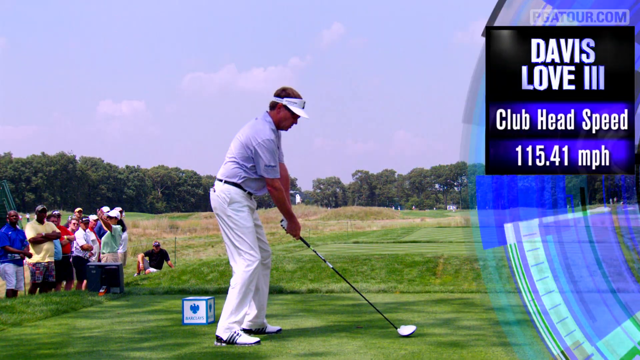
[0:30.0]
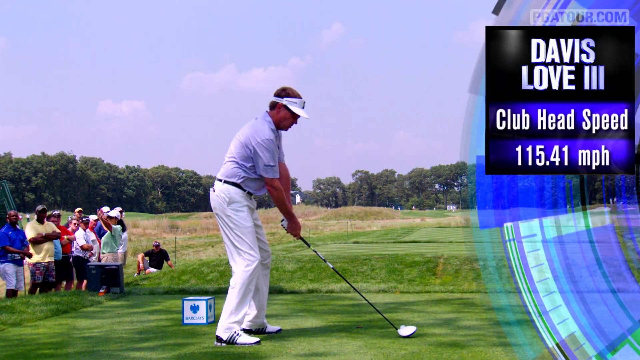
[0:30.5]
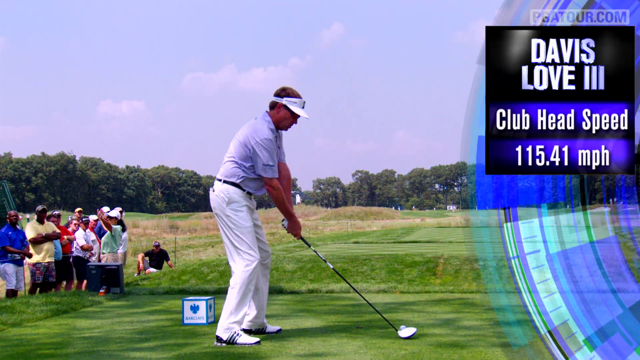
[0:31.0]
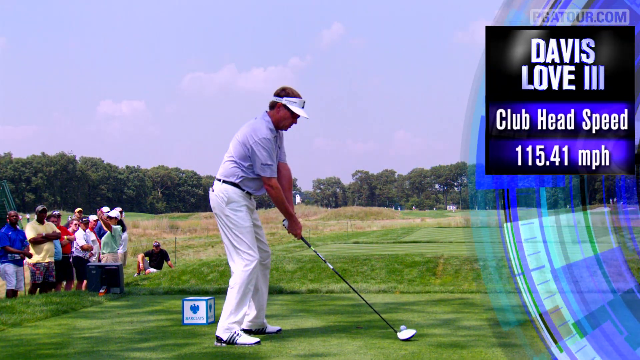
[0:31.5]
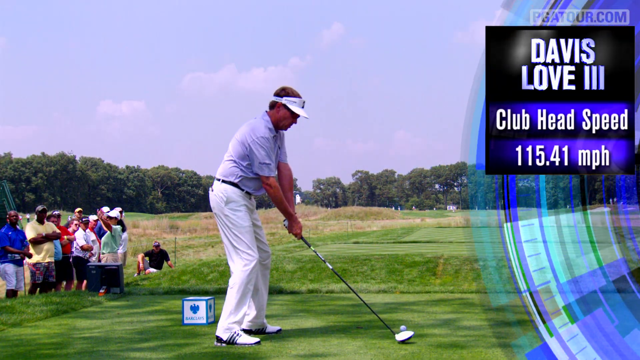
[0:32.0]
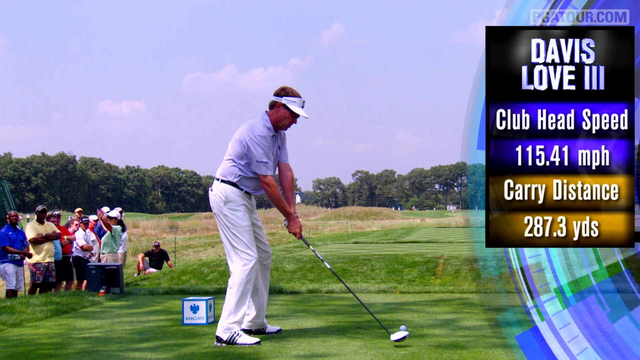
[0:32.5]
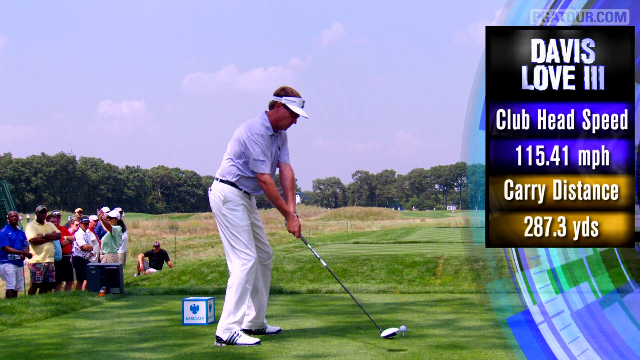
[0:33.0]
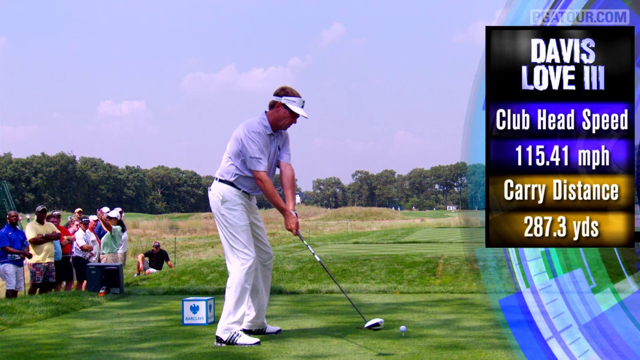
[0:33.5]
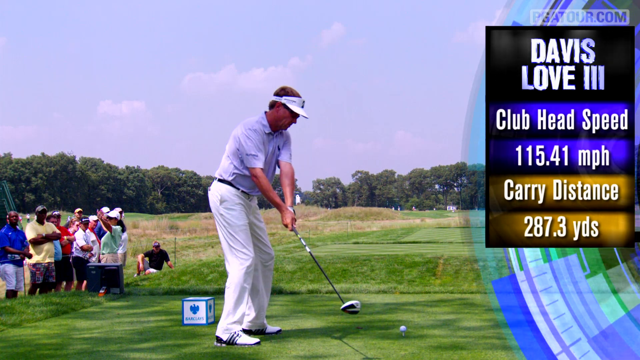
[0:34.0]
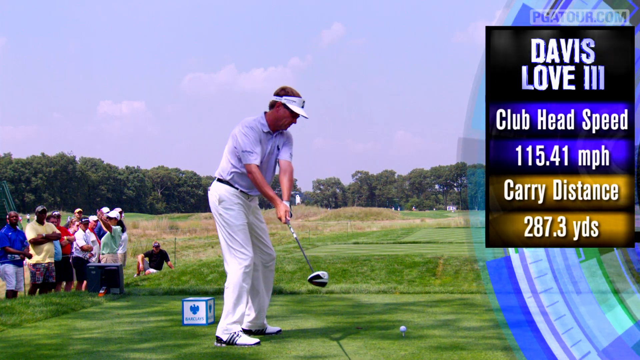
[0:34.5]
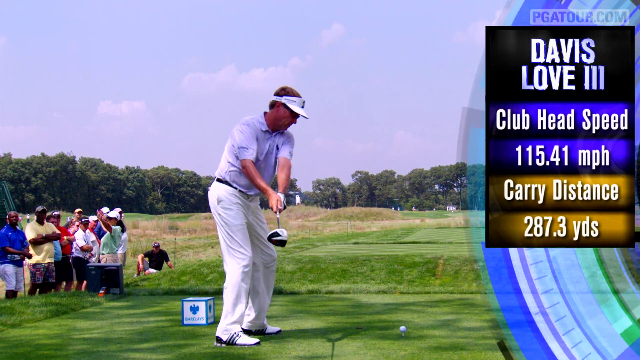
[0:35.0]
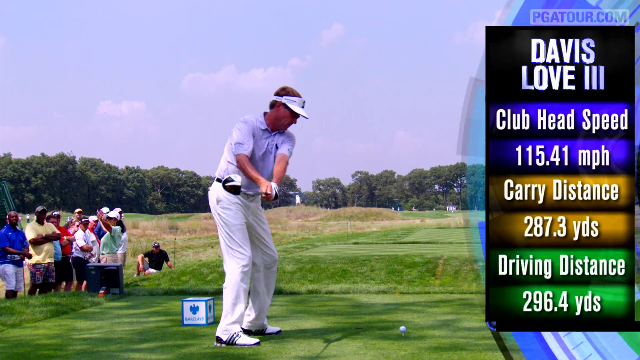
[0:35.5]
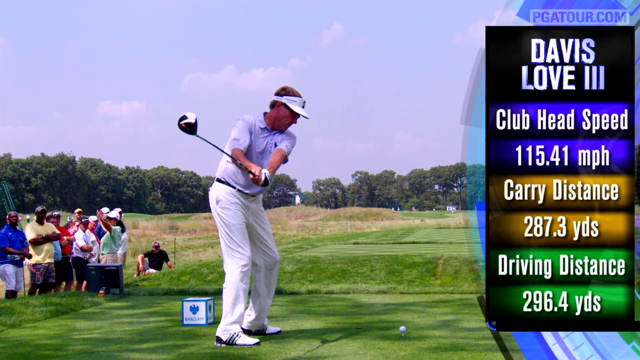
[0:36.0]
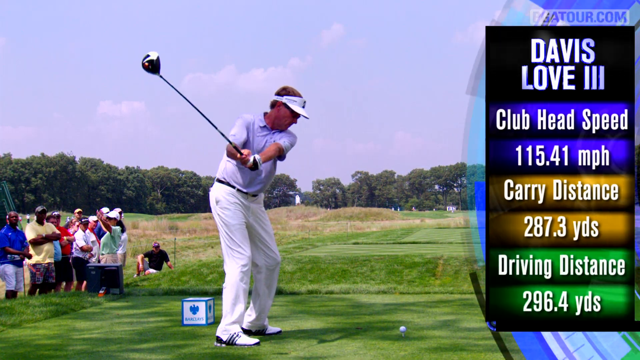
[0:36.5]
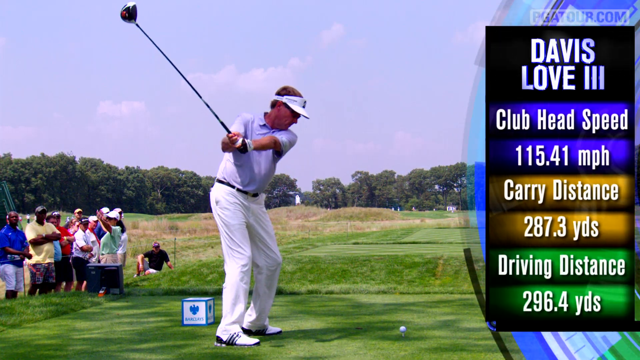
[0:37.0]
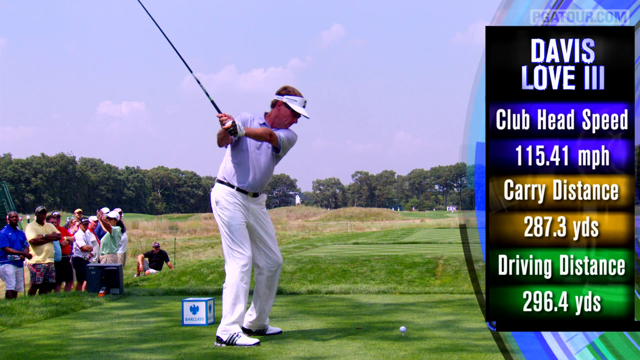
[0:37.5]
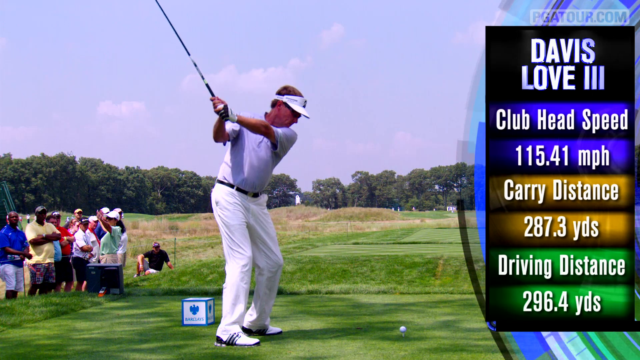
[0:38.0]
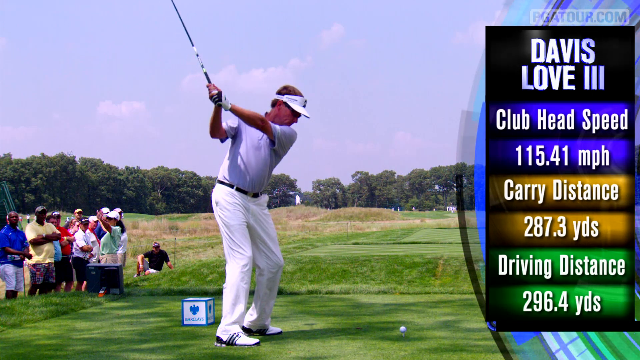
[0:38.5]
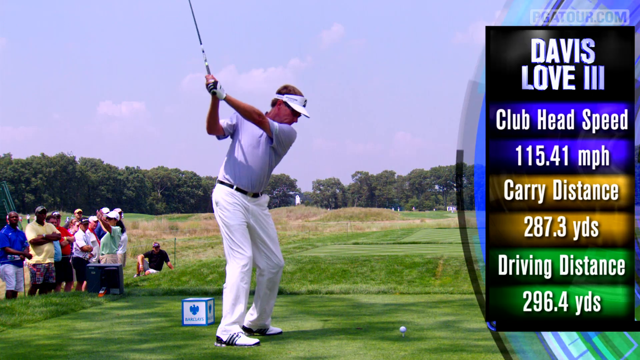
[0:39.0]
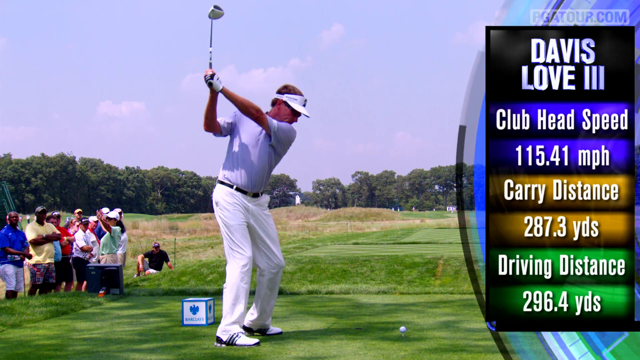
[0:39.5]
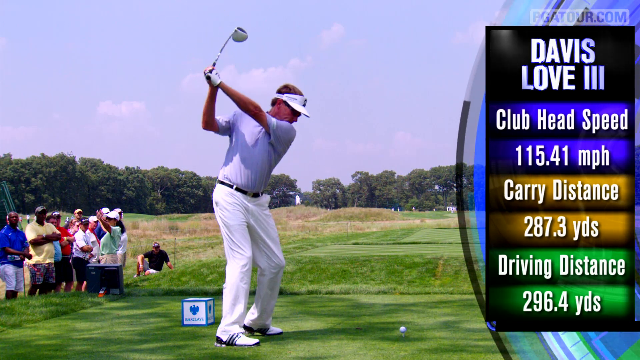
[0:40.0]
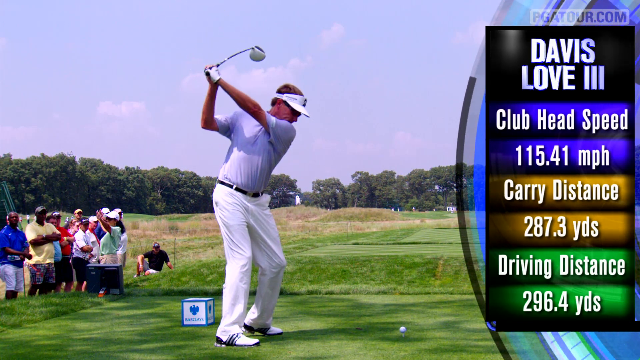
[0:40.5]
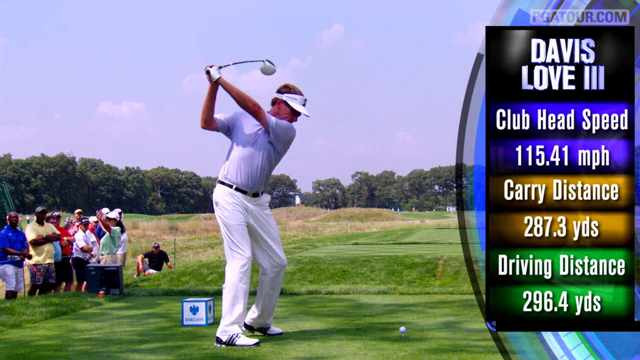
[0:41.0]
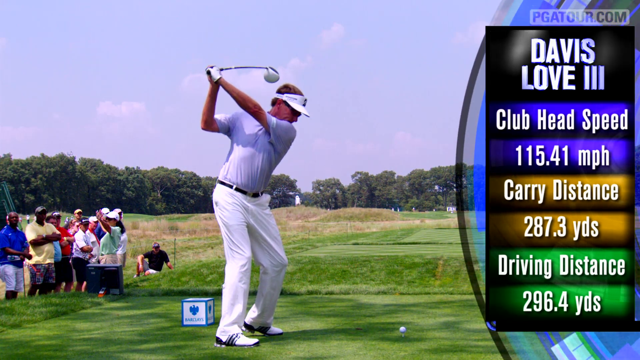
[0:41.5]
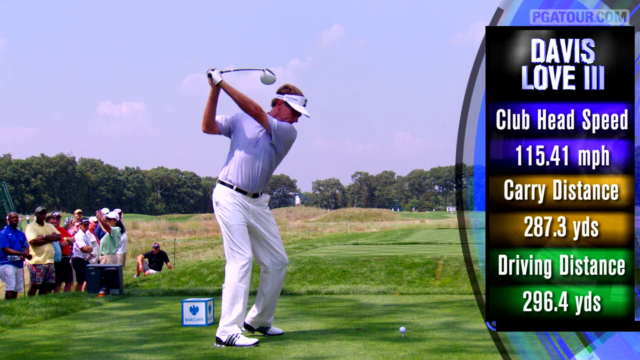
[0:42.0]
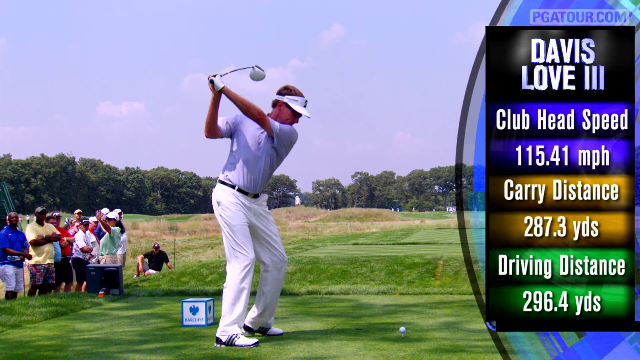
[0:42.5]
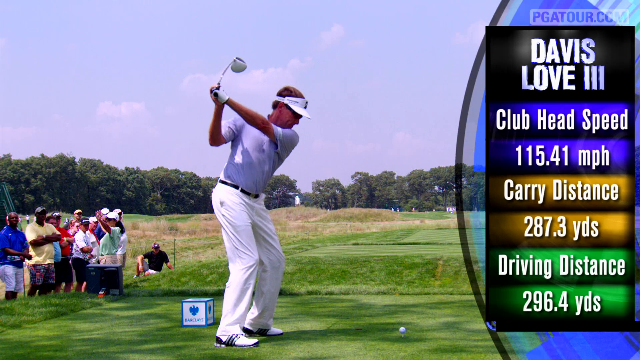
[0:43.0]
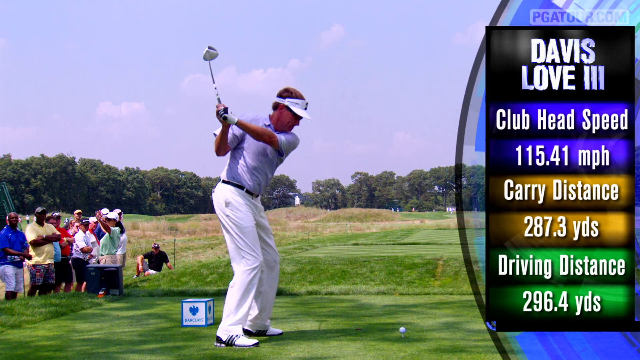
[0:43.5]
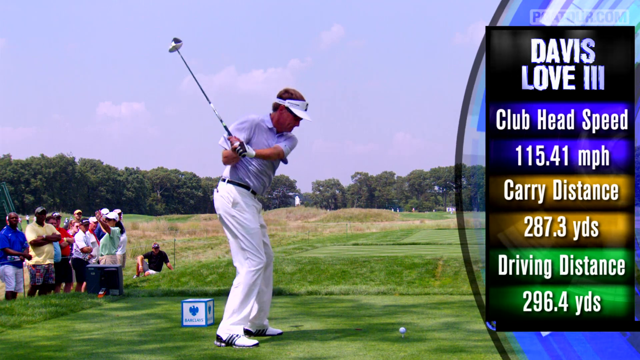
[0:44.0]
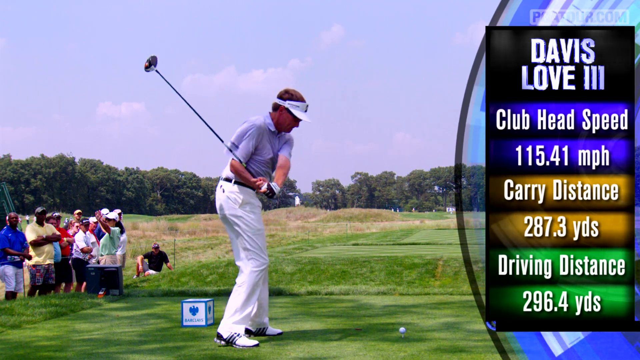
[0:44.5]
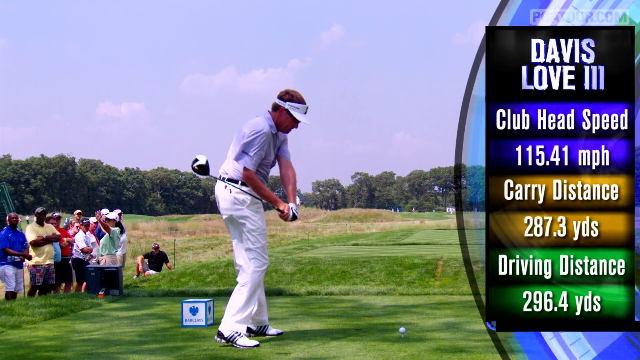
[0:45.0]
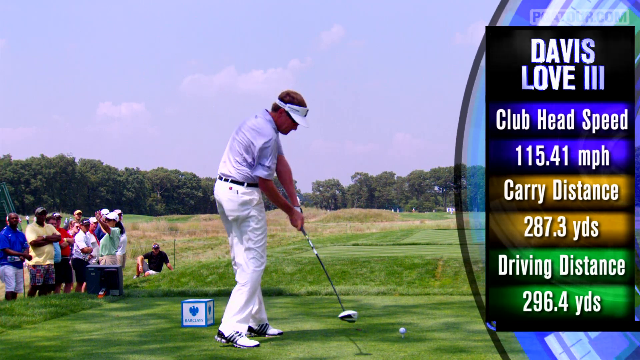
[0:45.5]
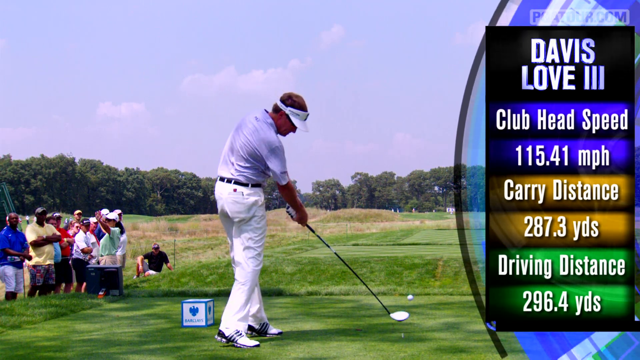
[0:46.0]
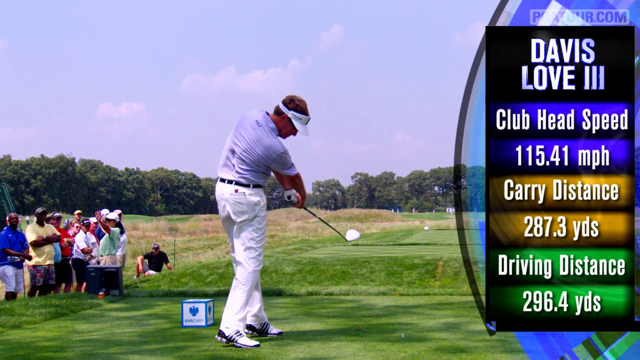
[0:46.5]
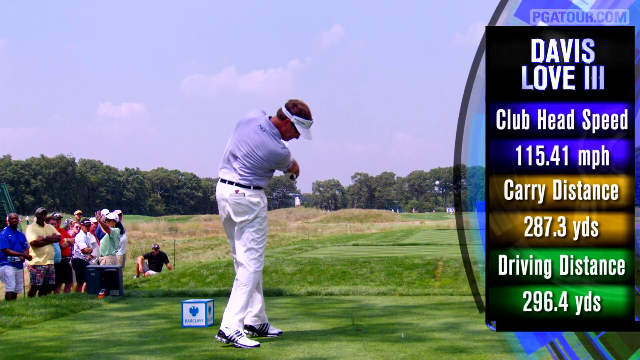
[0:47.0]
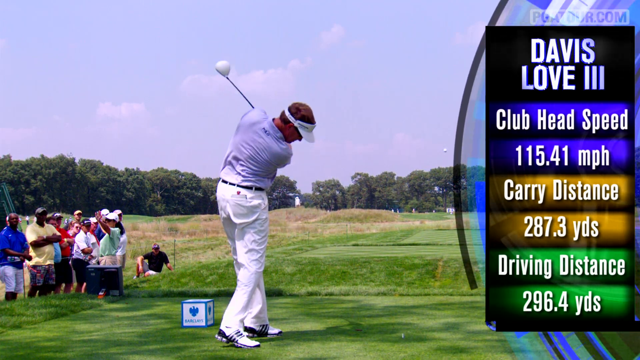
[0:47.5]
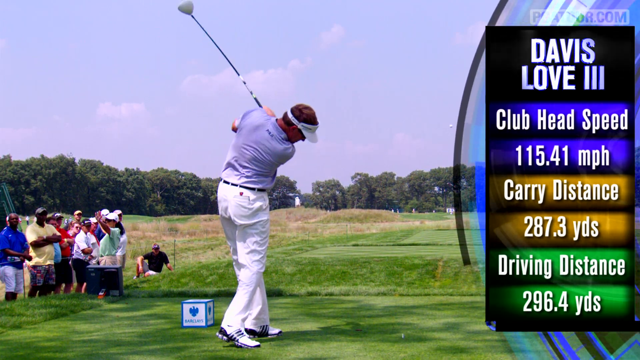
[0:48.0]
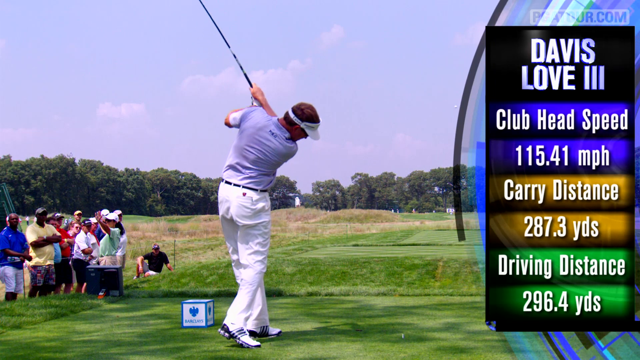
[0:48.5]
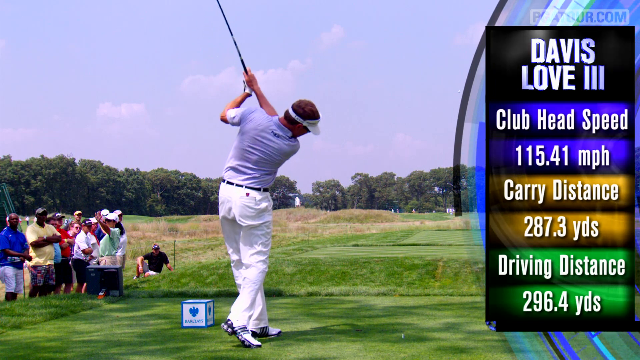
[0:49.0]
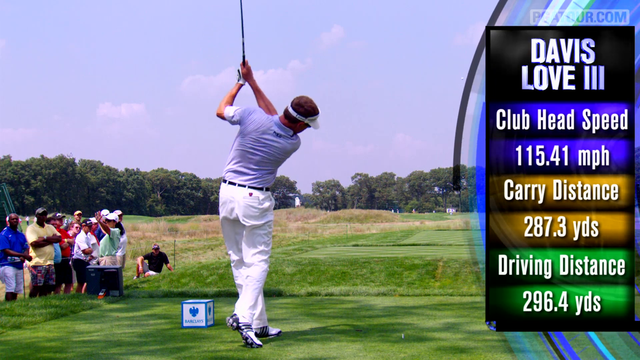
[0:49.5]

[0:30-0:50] From the angle behind him, the golfer gets ready to swing in slow motion. He rears back his driver slowly, swings, and connects with the ball, which launches out very quickly at about a 45-degree angle. At the beginning, text on the top right reads "Davis Love III clubhead speed 115.41 miles per hour, carry distance 287.3 yards, driving distance 296.4 yards." The sky is a little cloudy, but not too cloudy, and it does not look like rain. A small box on the ground to his left behind him says "Barclays" on it, presumably indicating a sponsor of the event.